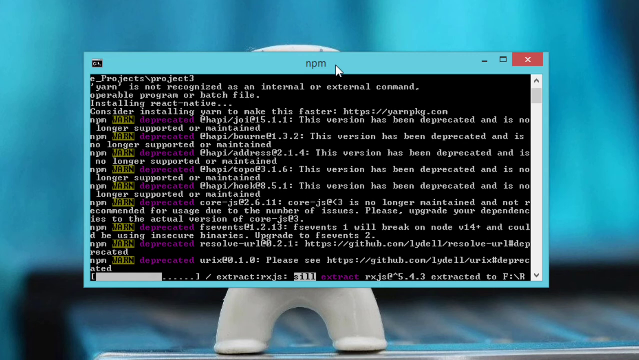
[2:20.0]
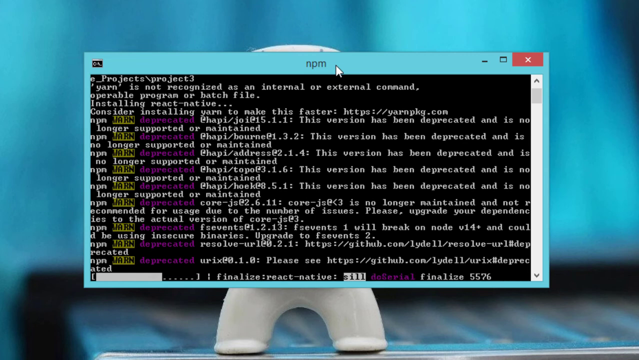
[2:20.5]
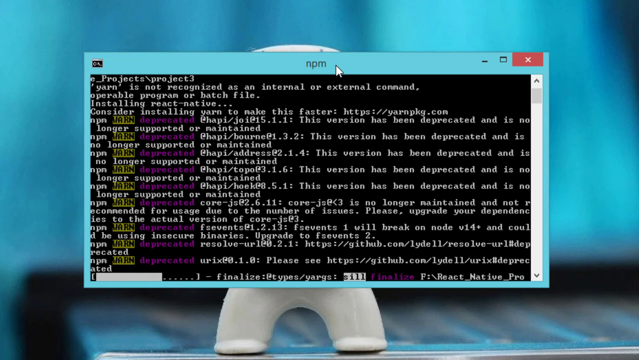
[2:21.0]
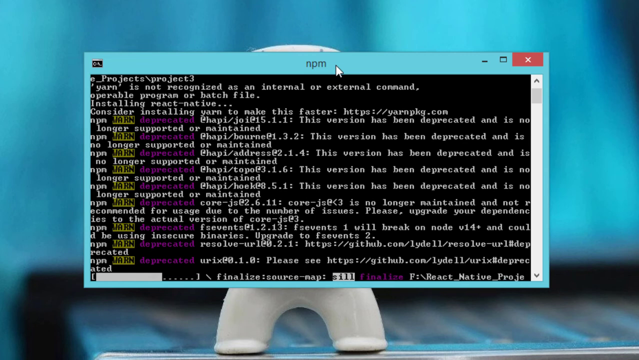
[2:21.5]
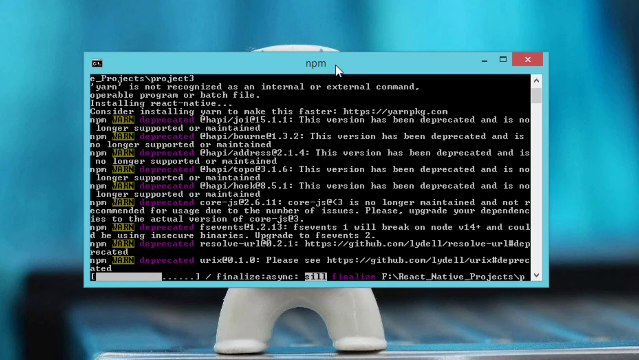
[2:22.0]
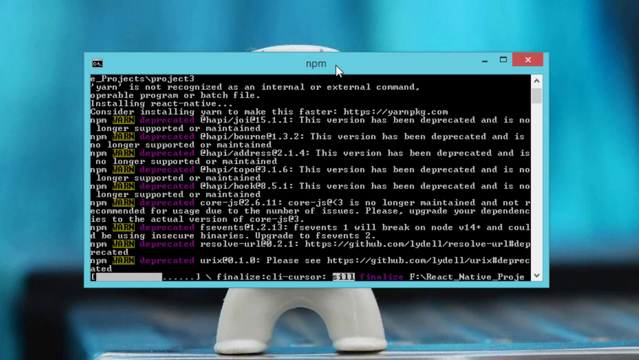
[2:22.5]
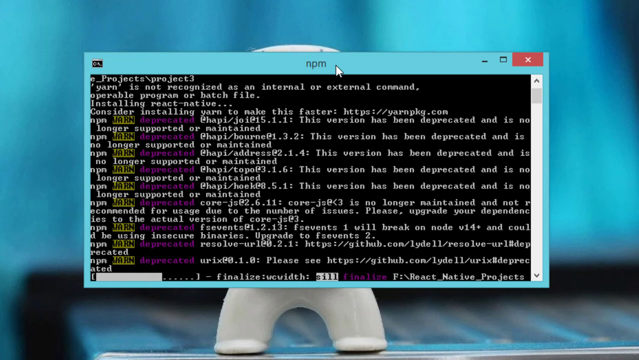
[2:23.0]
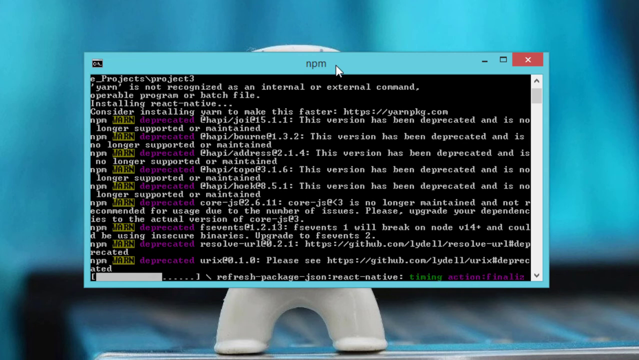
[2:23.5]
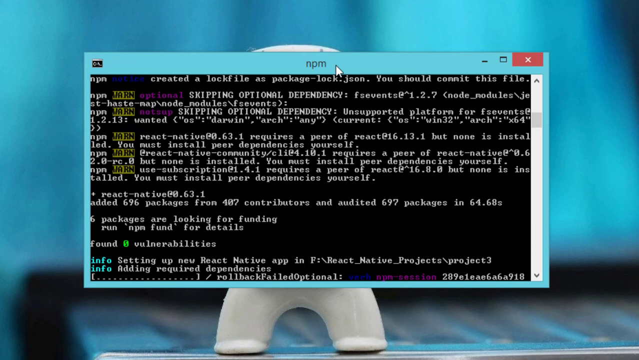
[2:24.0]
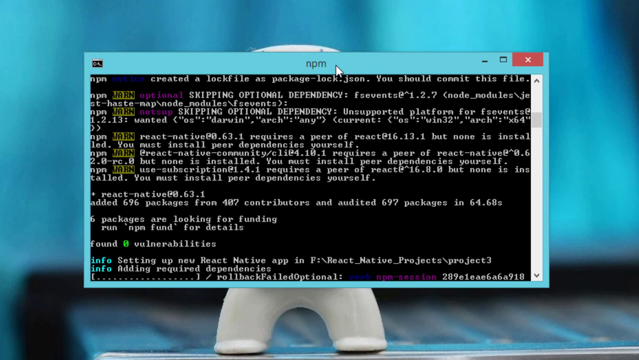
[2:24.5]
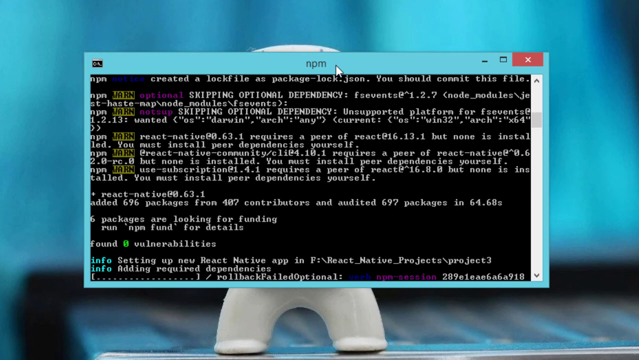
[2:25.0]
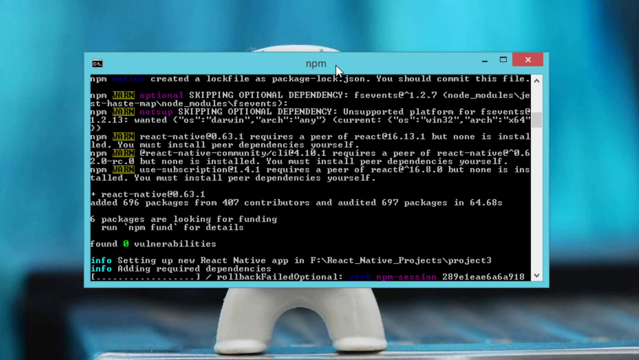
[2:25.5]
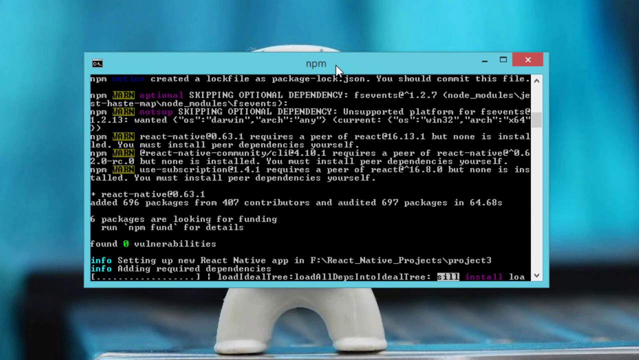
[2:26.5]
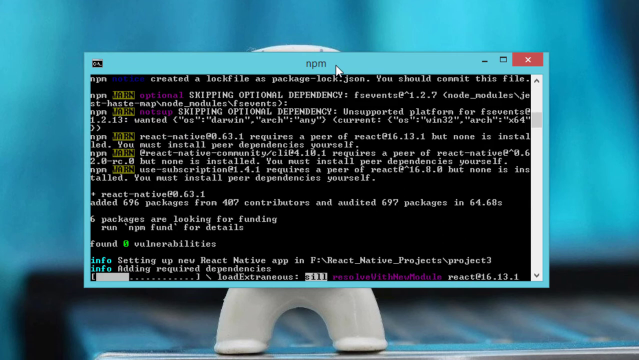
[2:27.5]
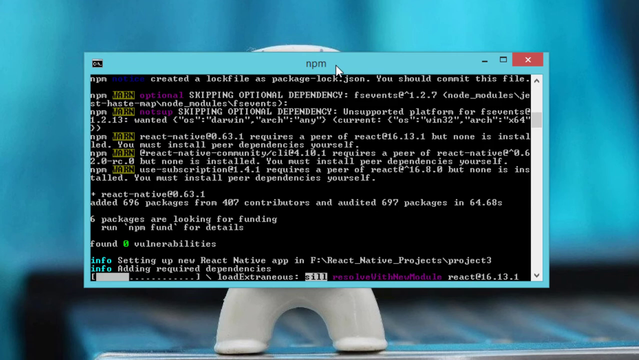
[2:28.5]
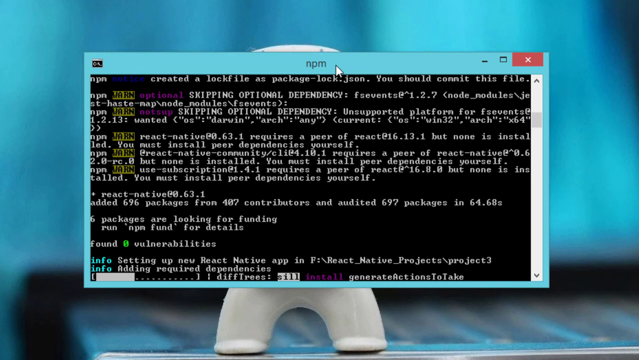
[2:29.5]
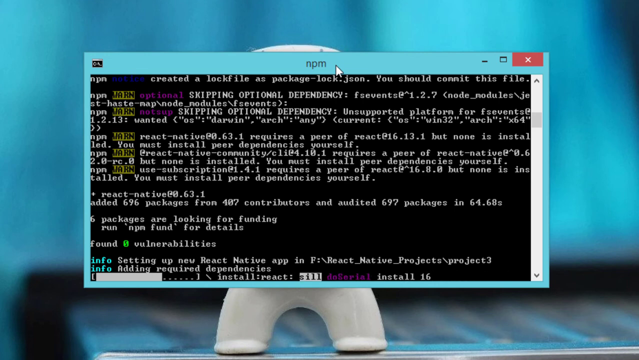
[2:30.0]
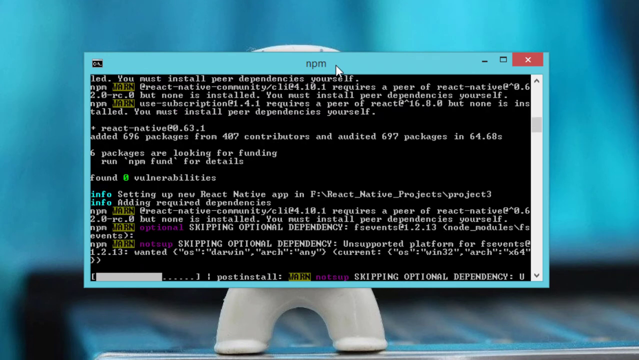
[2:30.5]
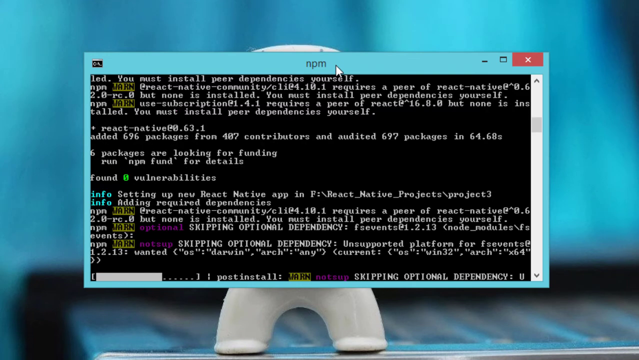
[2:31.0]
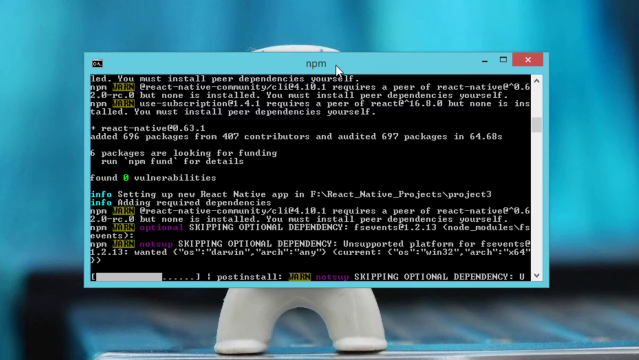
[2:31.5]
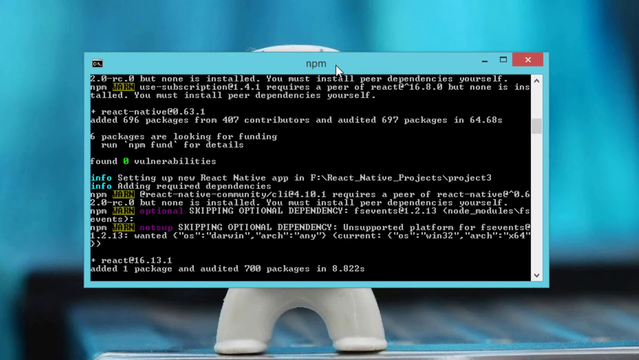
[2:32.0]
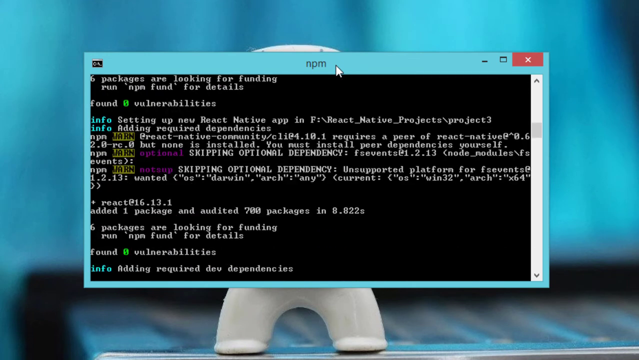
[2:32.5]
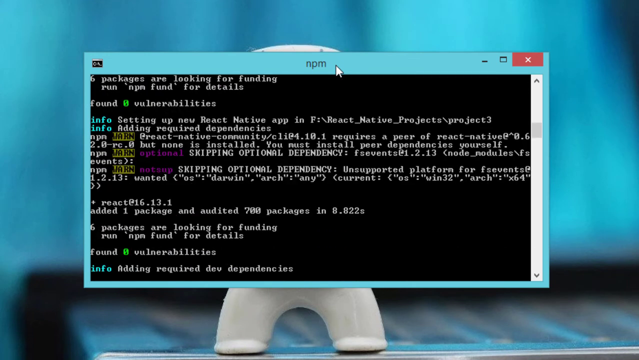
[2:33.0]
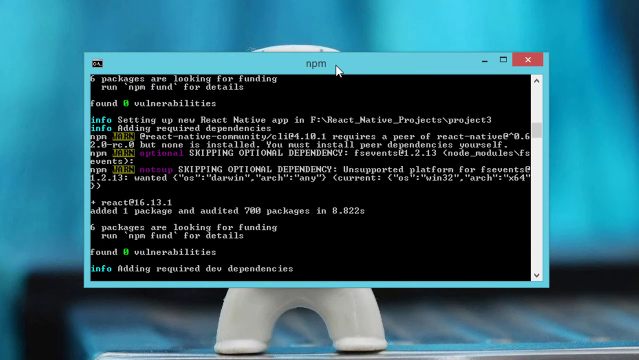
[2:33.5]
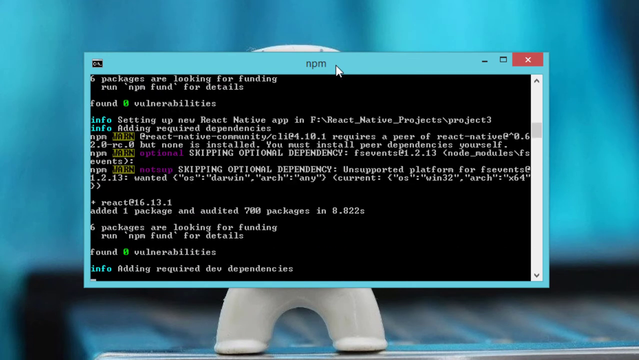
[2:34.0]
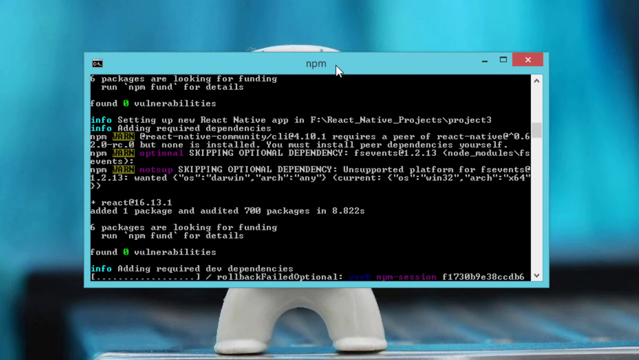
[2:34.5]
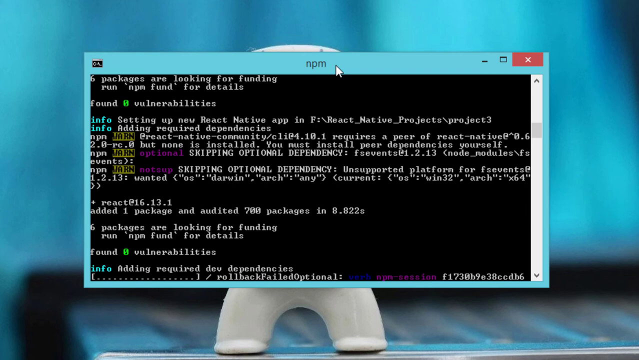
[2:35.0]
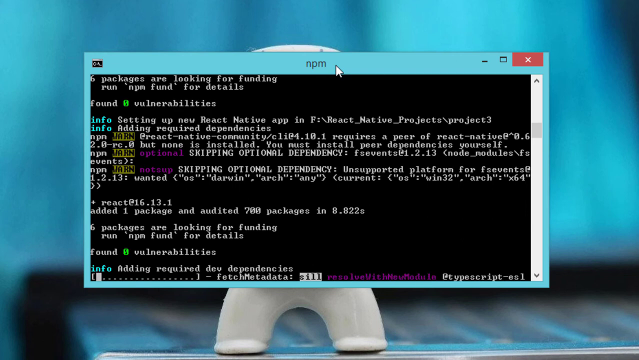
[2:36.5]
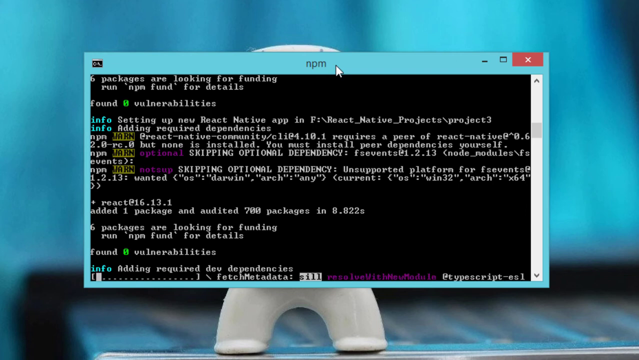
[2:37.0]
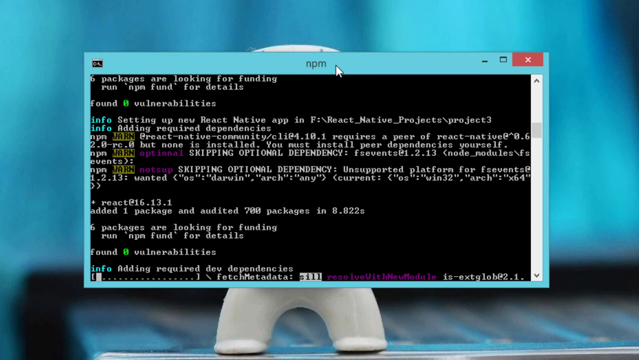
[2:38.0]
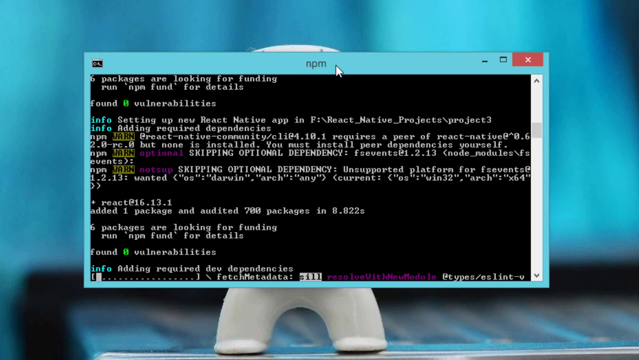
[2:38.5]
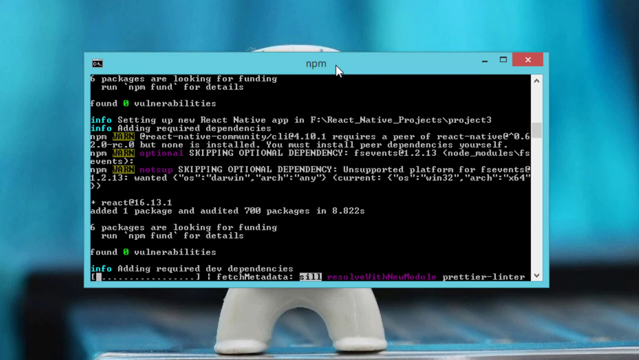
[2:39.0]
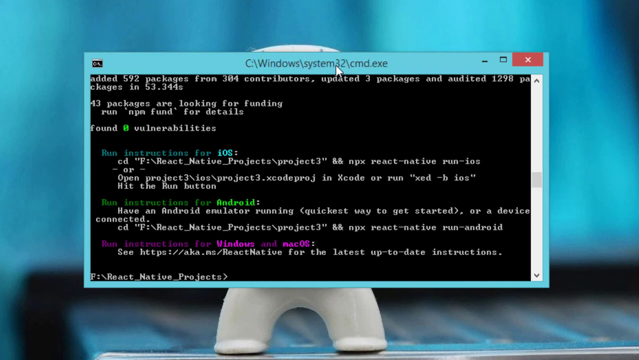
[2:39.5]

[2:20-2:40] A new React Native app is being set up in the react-native-project/project folder, and packages are being added. Npm gives a warning that React Native Community/CLI expects a matching version of React Native that has not been installed yet. Another warning says it is skipping a package because it only works on Mac computers, not Windows, and this computer runs Windows. React version 16.18.1 is added, and about 700 packages are checked for security problems, with zero found. It also mentions that six packages are looking for funding. Then it starts adding dev dependencies.